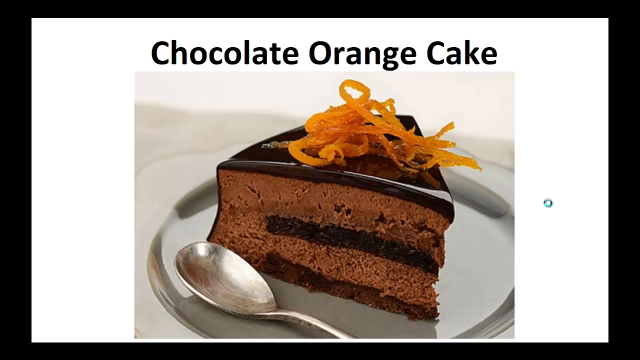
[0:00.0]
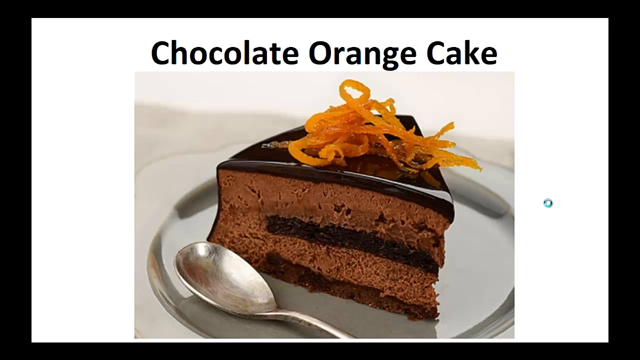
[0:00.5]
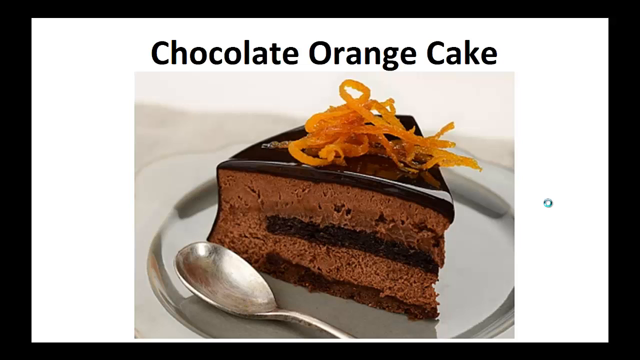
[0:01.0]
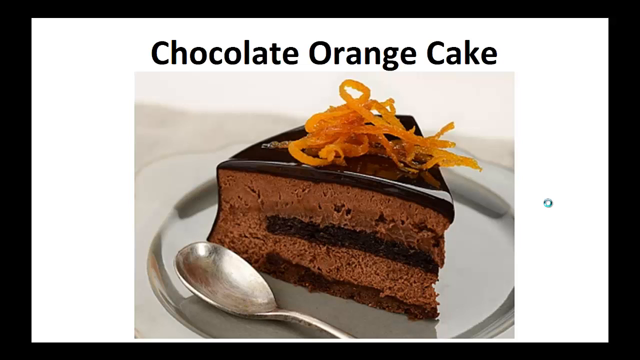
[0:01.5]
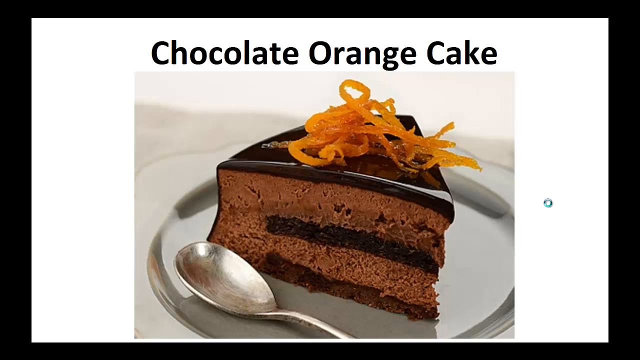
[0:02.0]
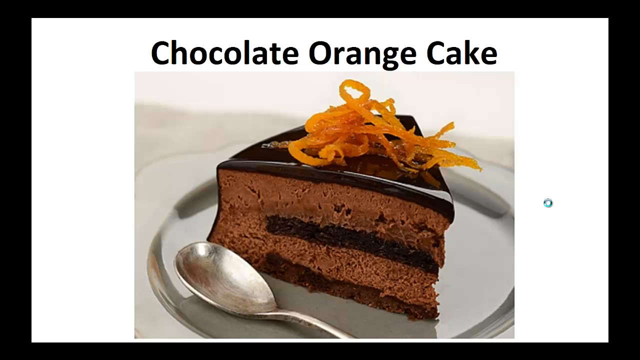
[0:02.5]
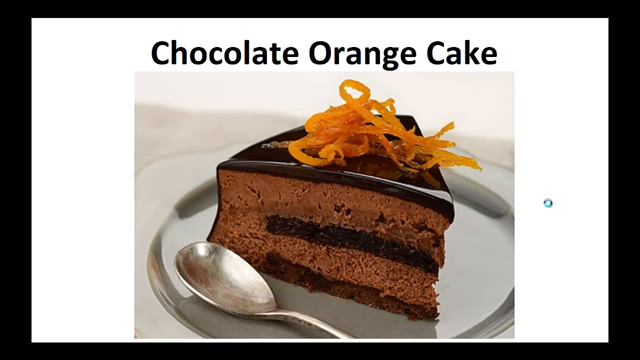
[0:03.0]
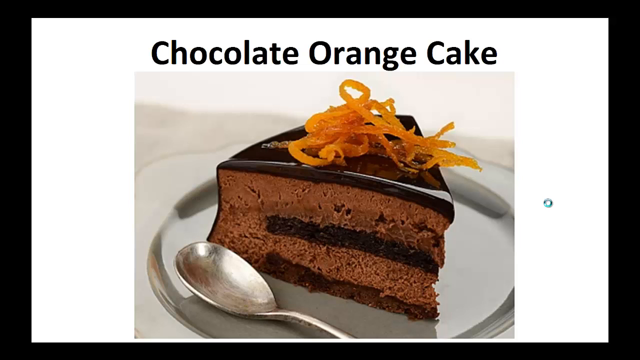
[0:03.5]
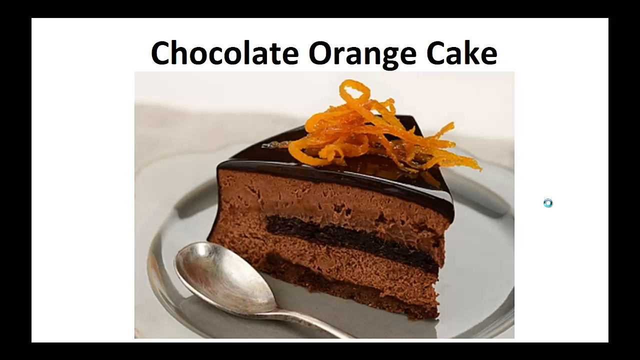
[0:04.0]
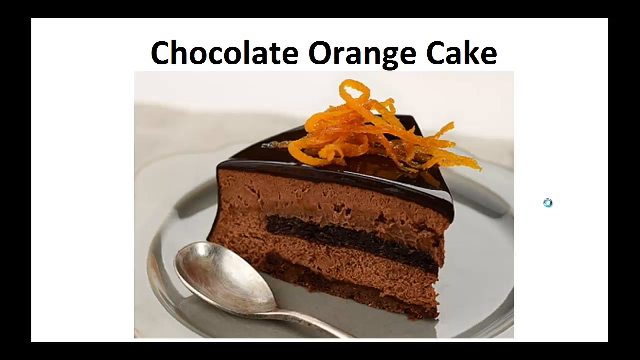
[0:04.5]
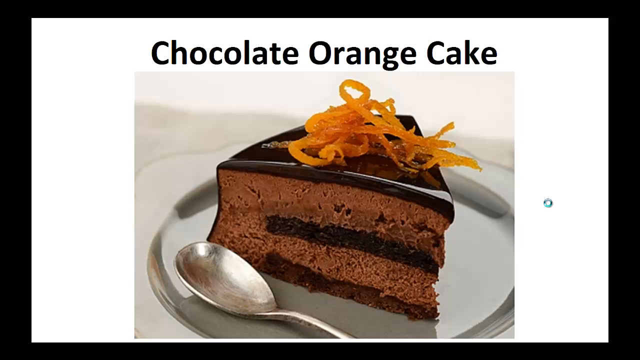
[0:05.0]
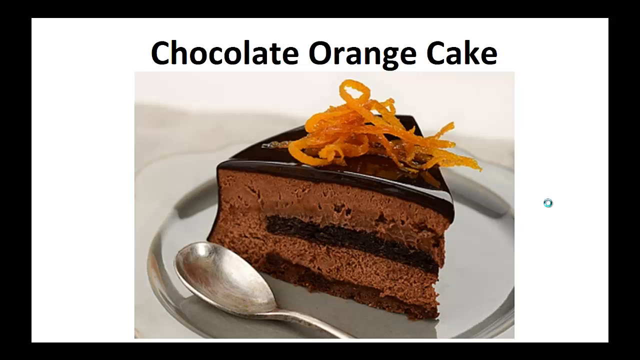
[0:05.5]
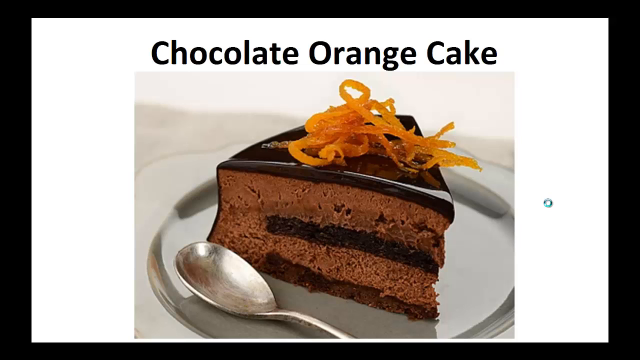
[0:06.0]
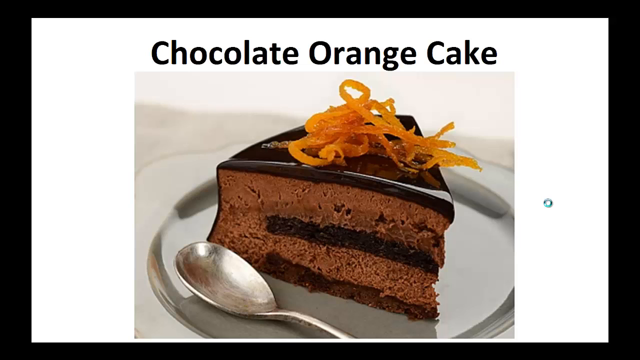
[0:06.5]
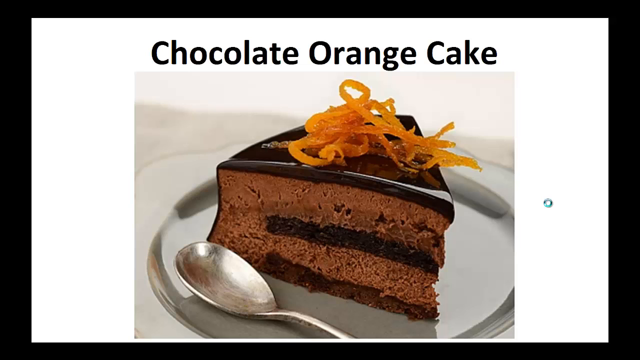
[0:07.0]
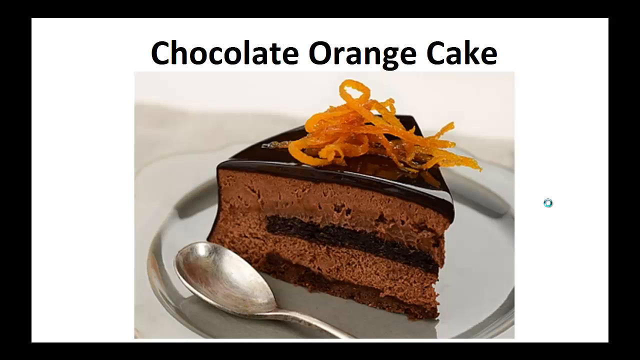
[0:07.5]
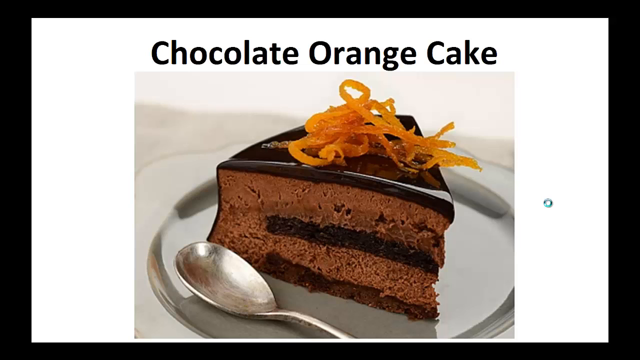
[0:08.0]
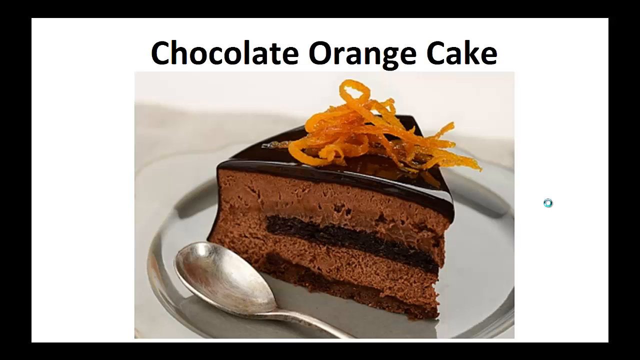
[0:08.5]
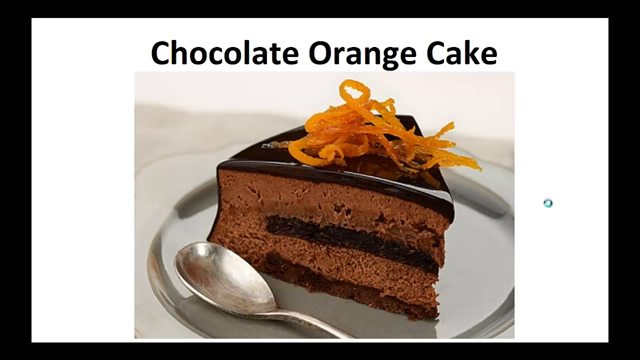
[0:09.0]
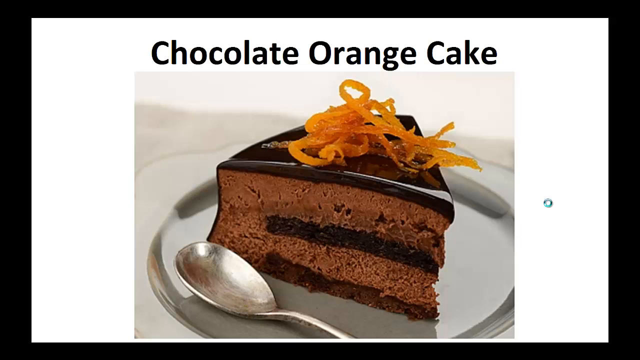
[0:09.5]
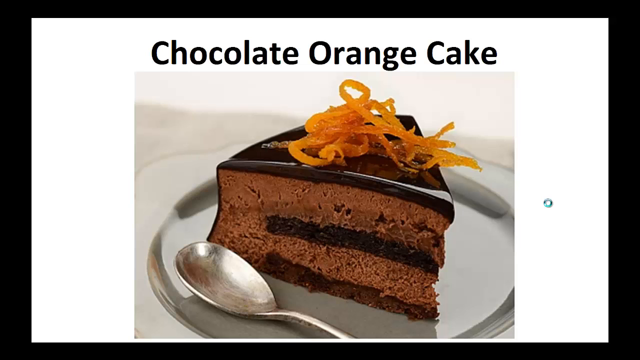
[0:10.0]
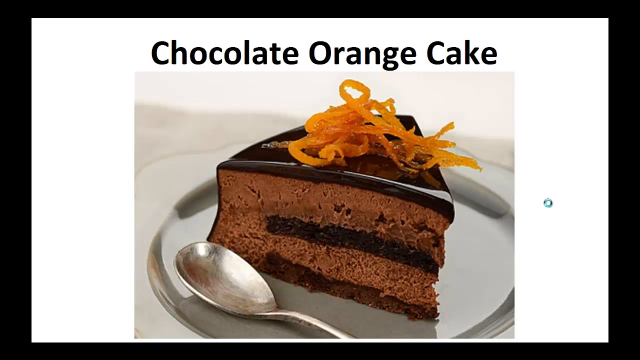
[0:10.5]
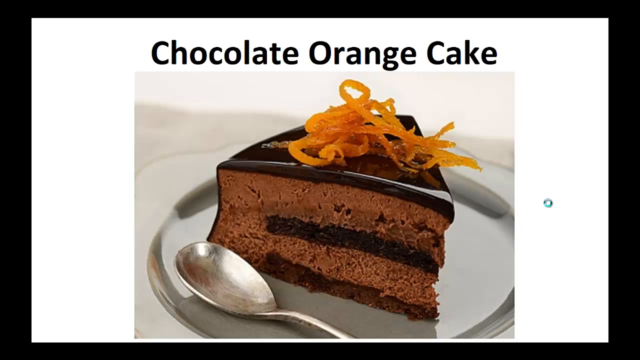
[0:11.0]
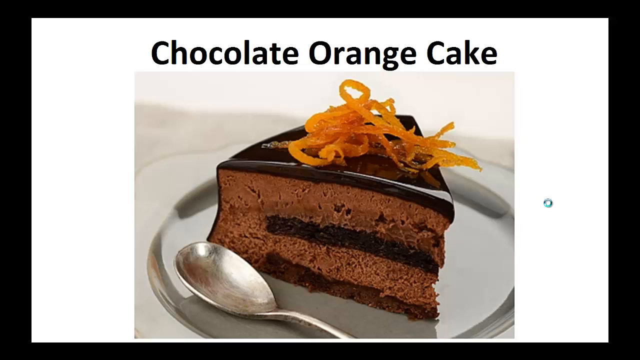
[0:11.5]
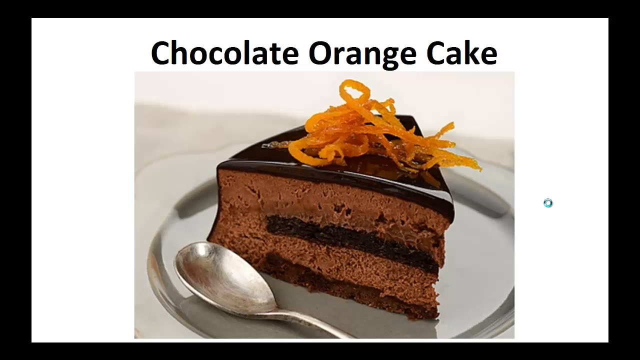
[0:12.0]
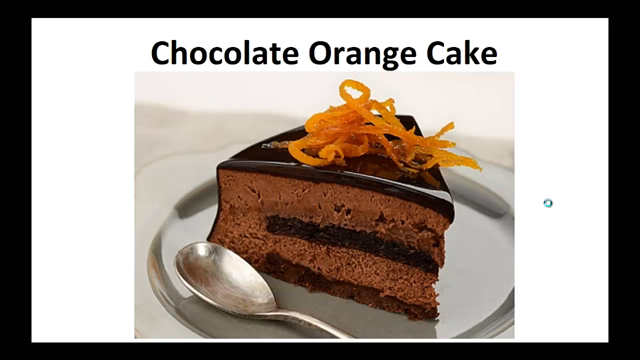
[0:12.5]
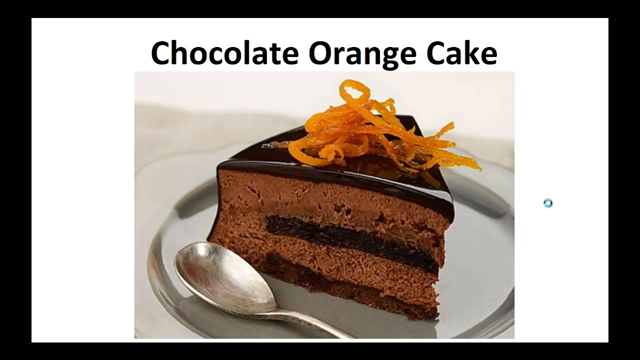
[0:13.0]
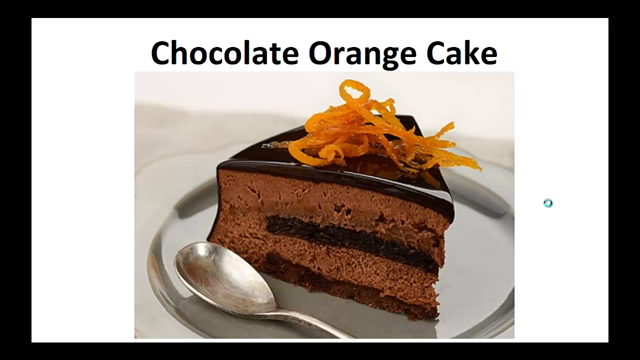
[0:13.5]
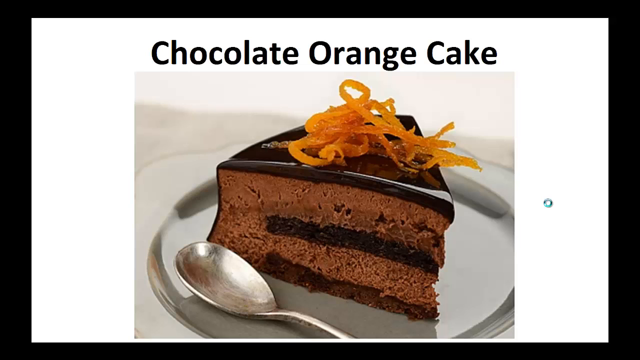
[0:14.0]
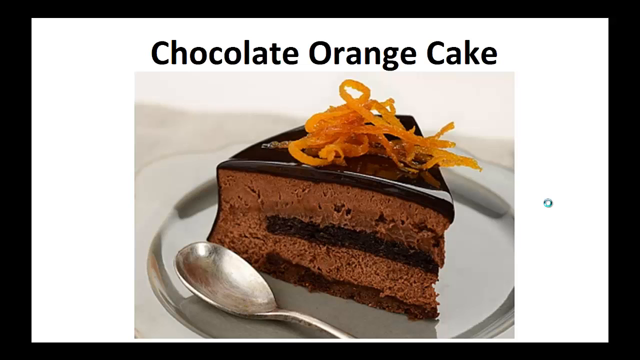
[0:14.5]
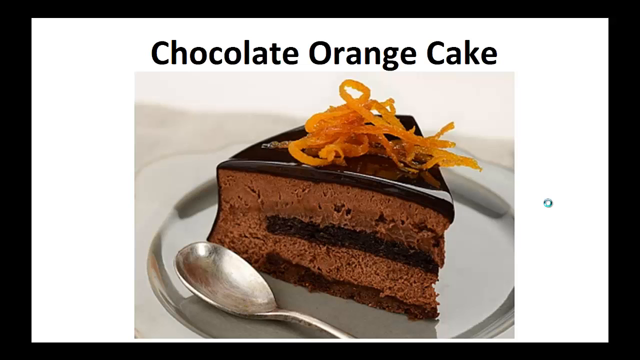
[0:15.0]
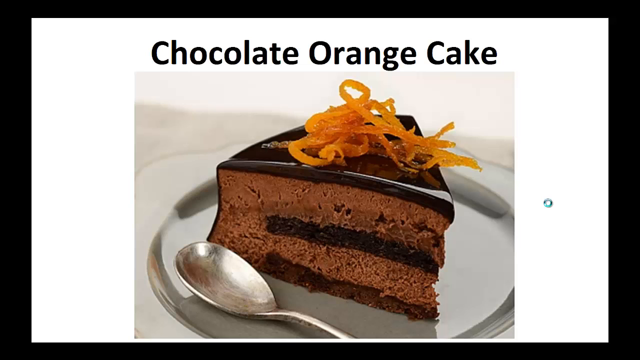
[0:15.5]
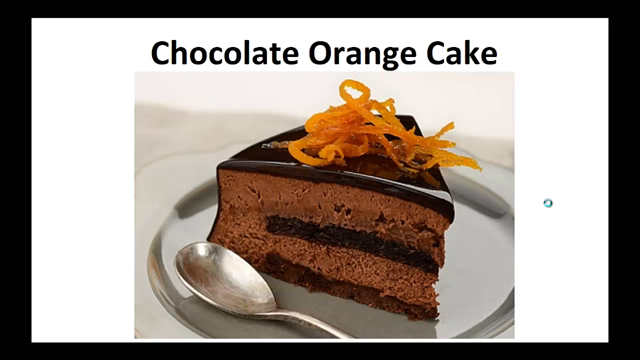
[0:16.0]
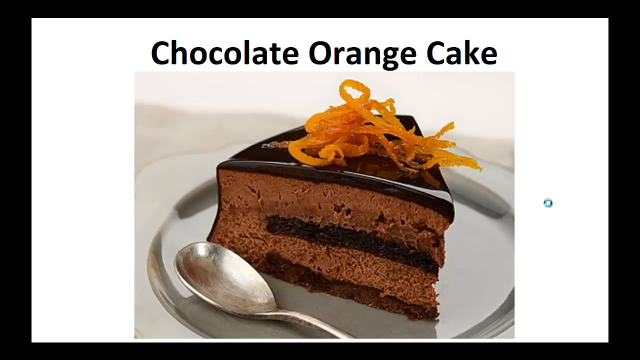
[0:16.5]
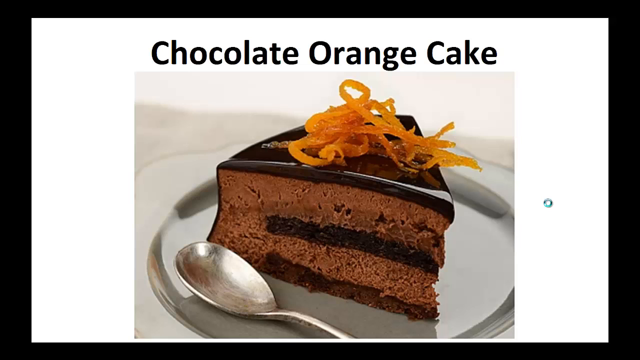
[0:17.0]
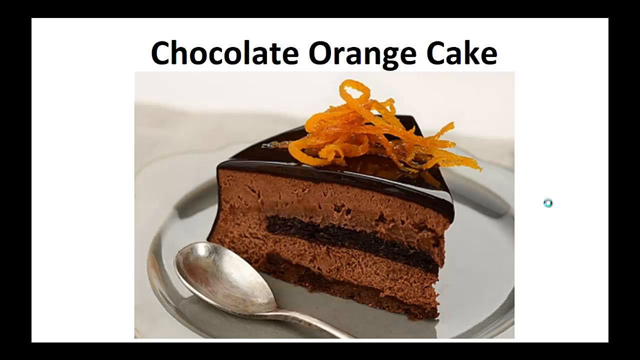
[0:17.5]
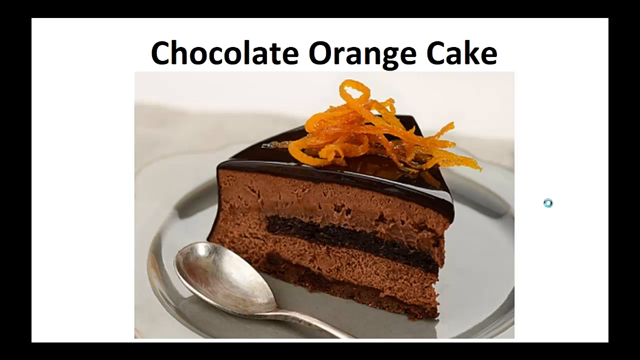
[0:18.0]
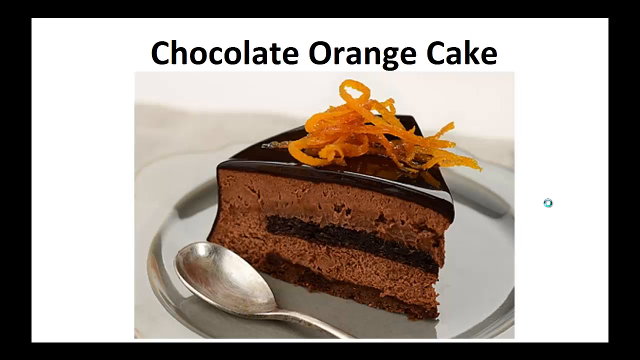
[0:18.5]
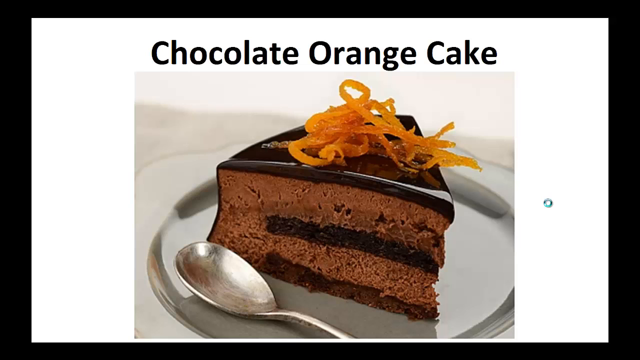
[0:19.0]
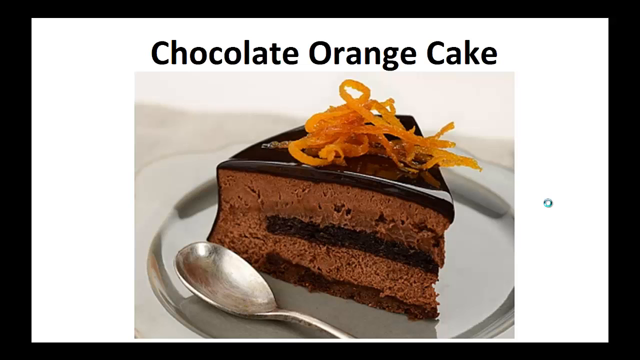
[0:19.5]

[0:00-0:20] The video opens on a white background with the words "chocolate orange cake" in black font, centered across the middle top. Below the text is a square that is largely white, with some sort of shading towards its top left, and centered at the bottom of the square, at least partially, is a piece of chocolate orange cake. The plate appears to be white with a ceramic appearance, and the cake is in the centre of the base of the plate, which has a central circle. A silver spoon lies with its bowl at the bottom left and its handle pointing out and disappearing off the bottom of the frame around the center. The cake seems to have candied orange peel placed on top.